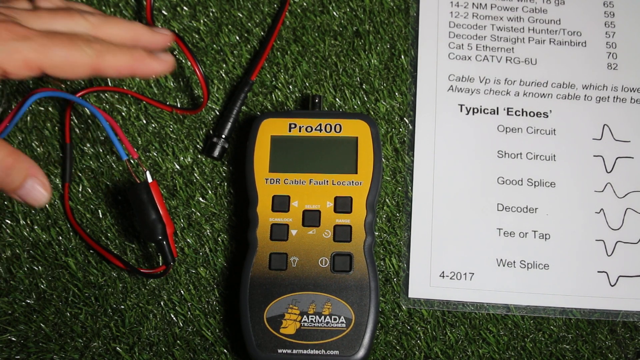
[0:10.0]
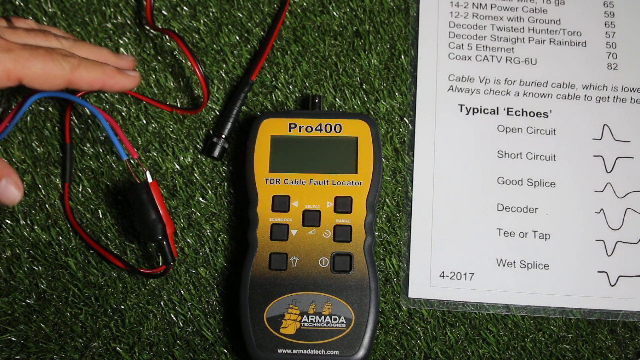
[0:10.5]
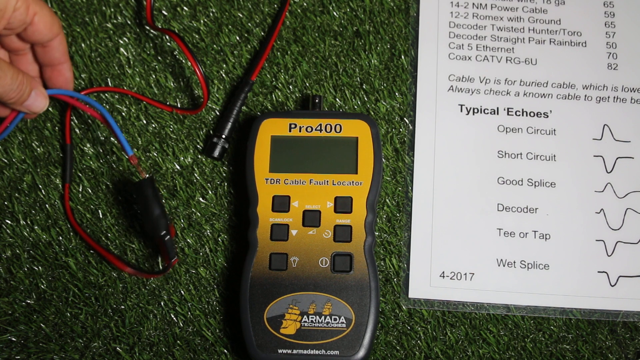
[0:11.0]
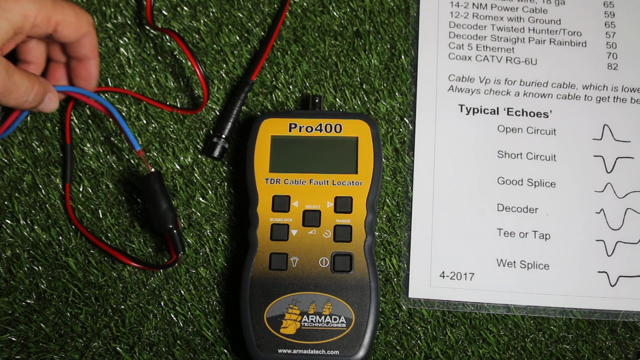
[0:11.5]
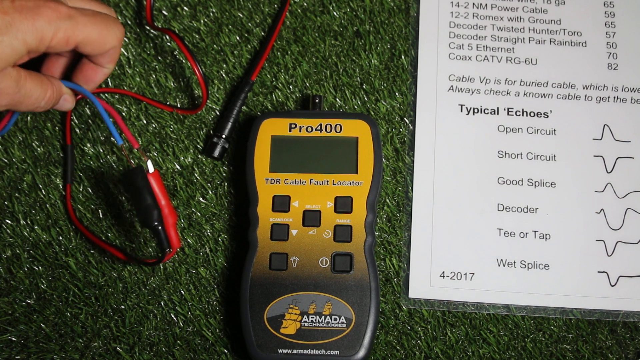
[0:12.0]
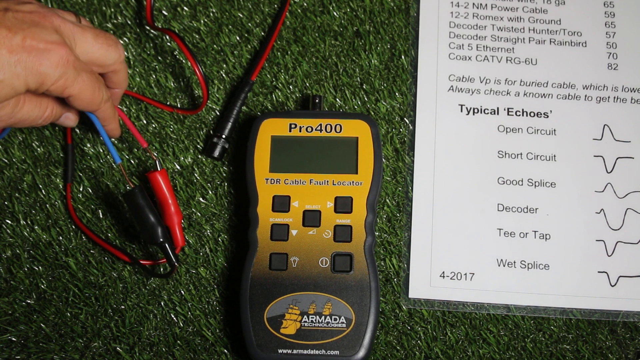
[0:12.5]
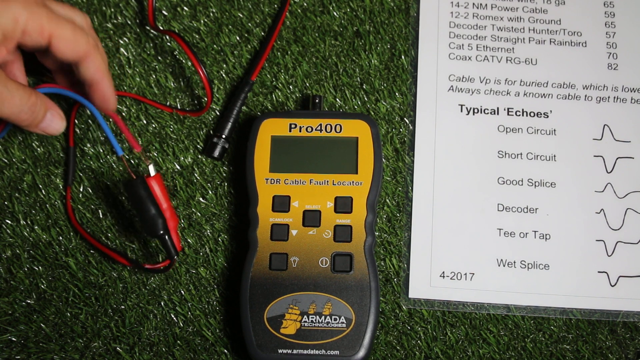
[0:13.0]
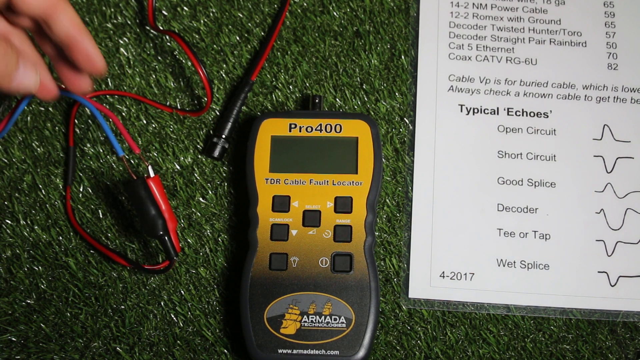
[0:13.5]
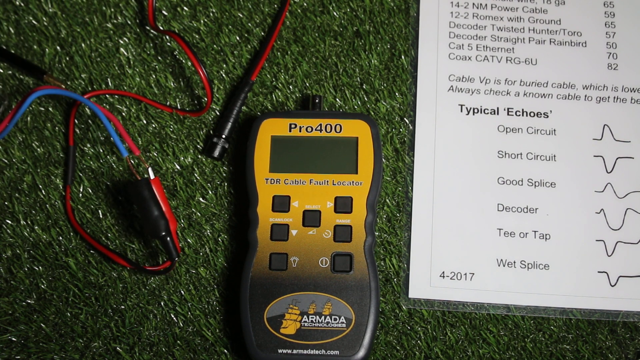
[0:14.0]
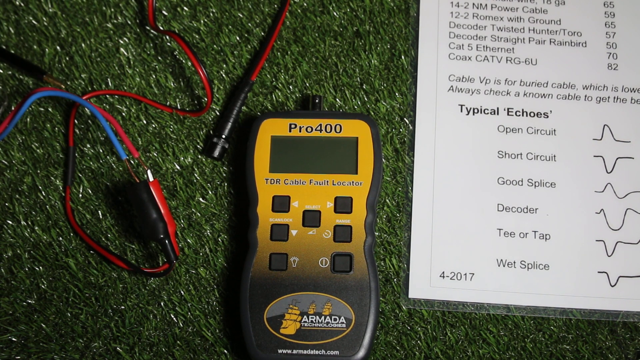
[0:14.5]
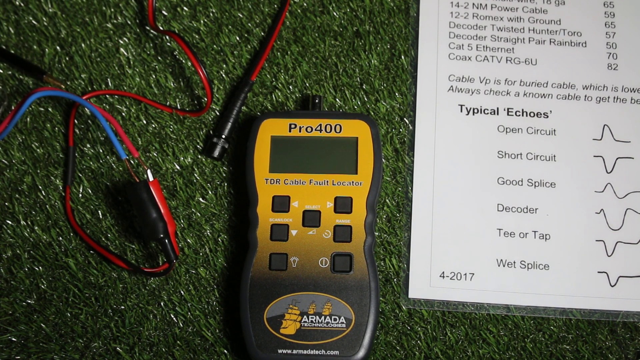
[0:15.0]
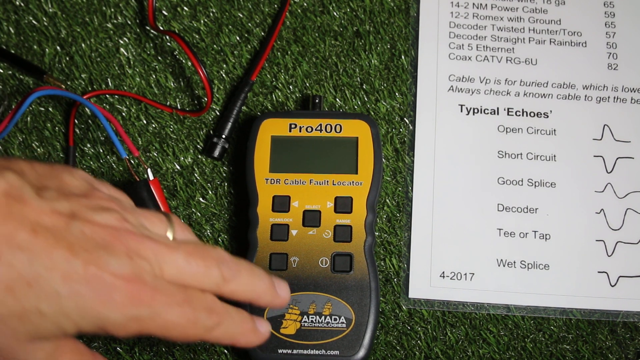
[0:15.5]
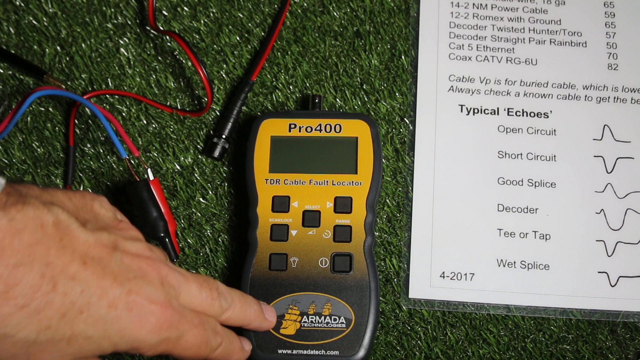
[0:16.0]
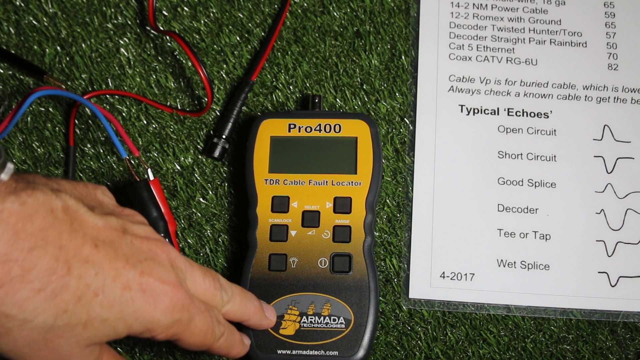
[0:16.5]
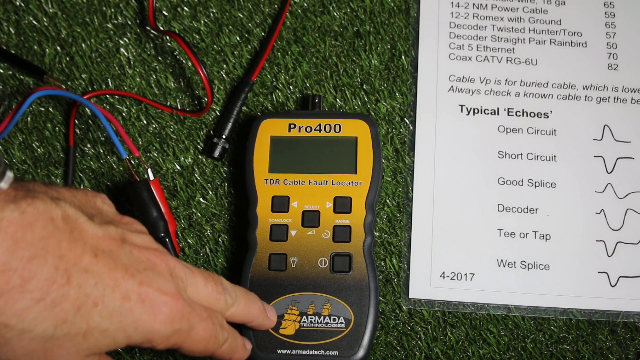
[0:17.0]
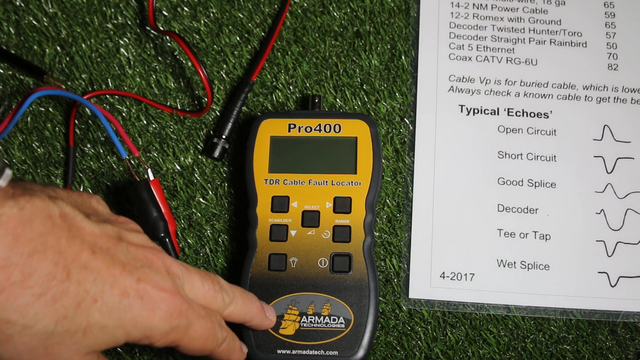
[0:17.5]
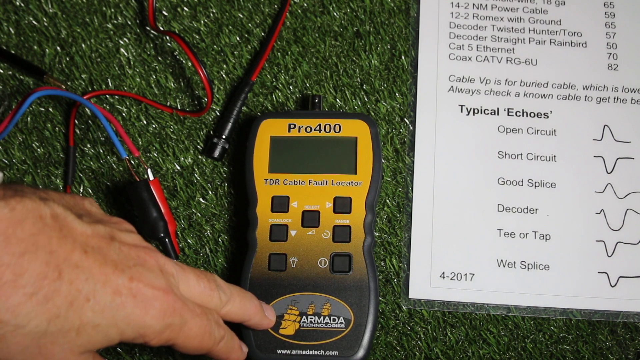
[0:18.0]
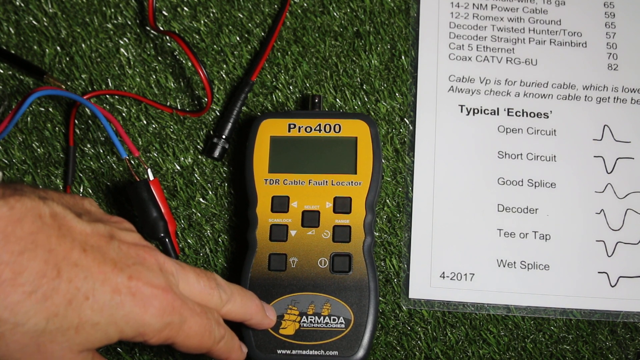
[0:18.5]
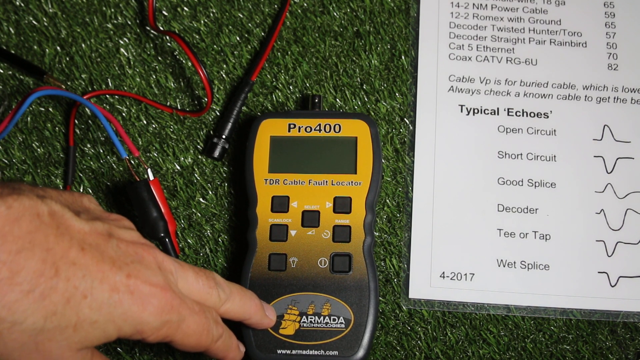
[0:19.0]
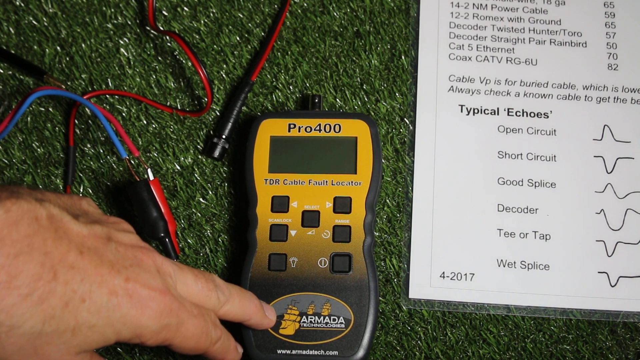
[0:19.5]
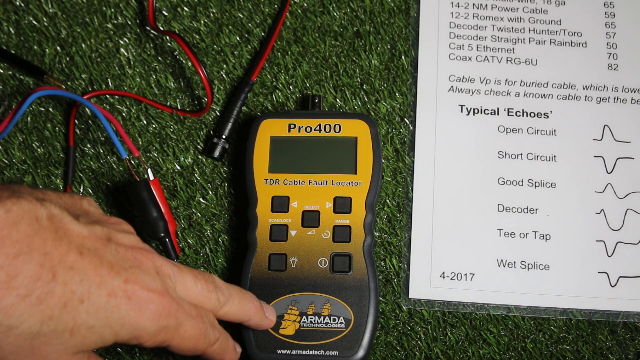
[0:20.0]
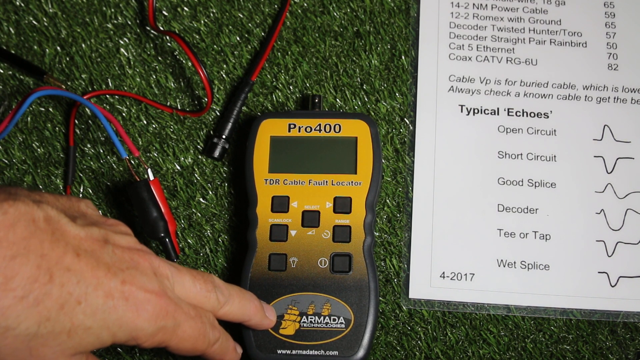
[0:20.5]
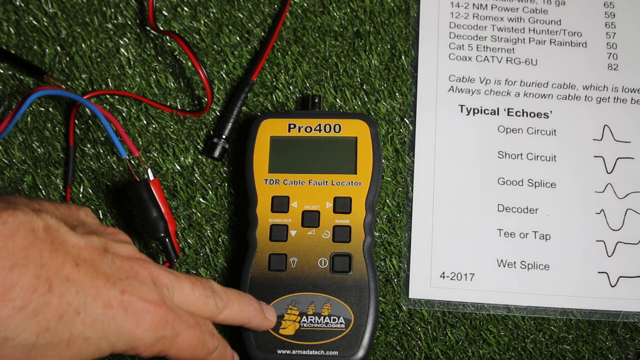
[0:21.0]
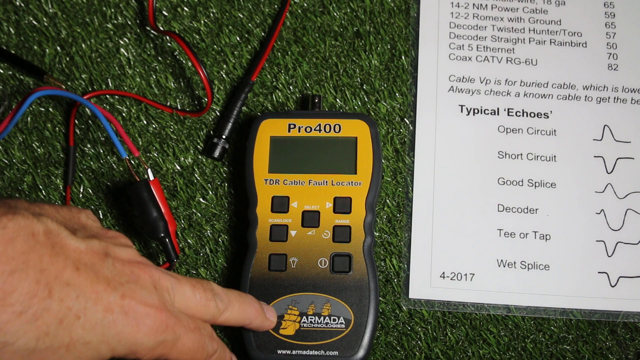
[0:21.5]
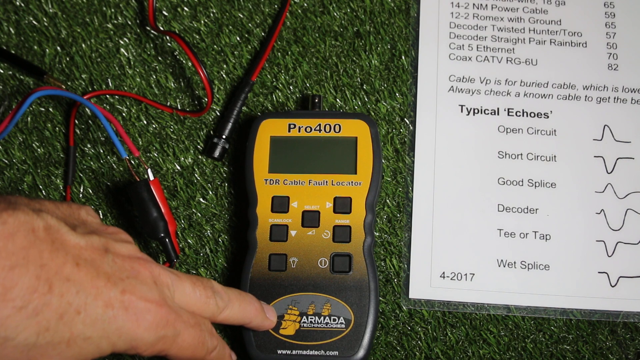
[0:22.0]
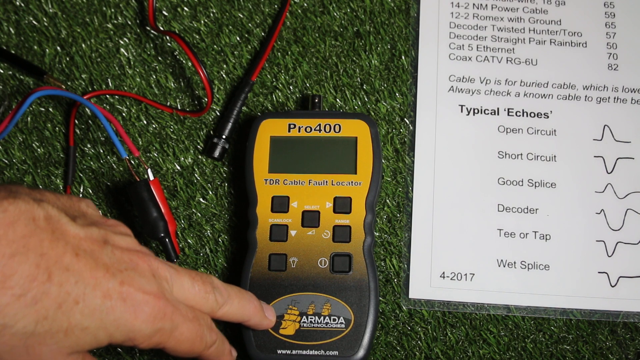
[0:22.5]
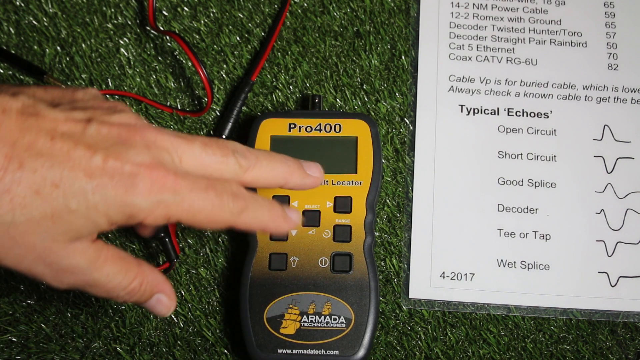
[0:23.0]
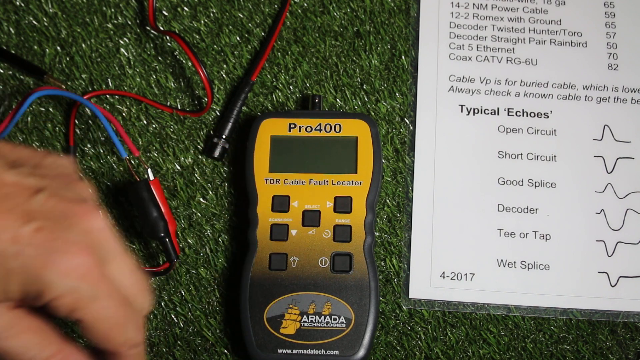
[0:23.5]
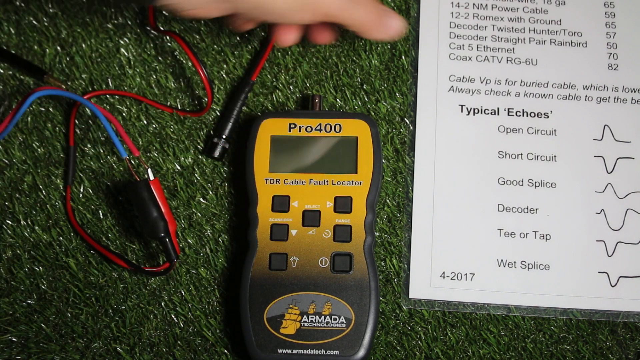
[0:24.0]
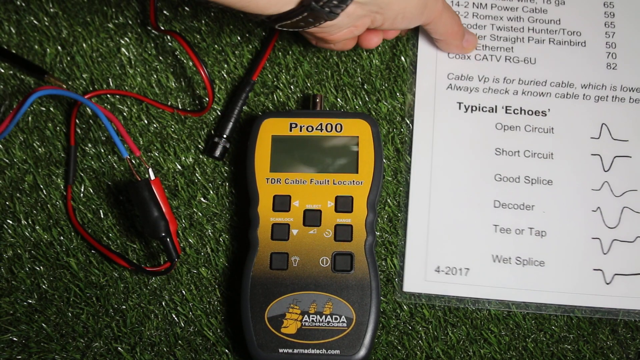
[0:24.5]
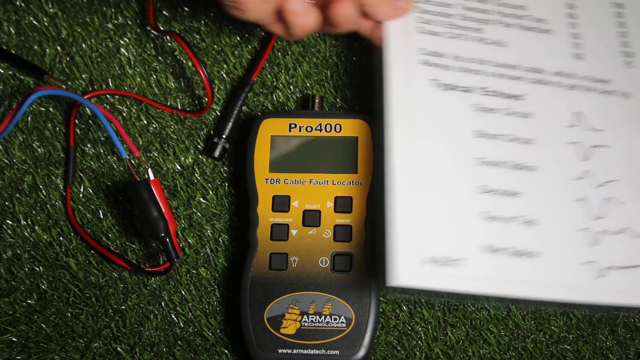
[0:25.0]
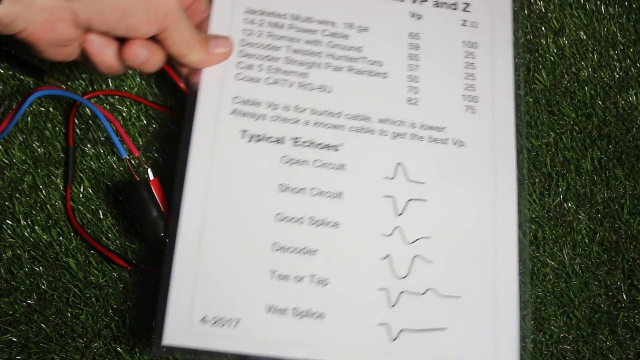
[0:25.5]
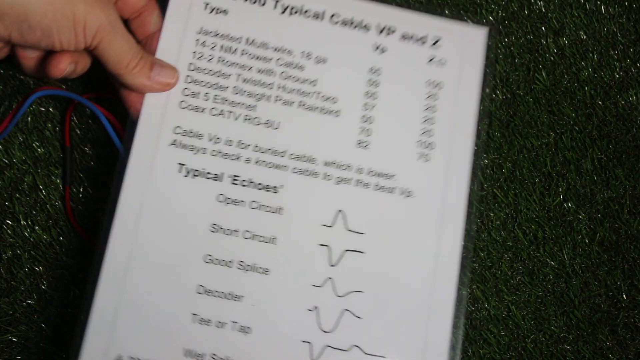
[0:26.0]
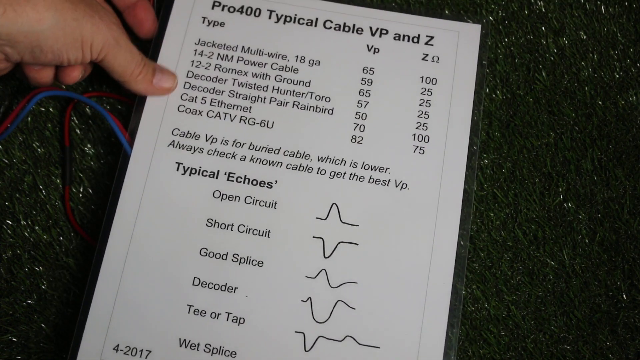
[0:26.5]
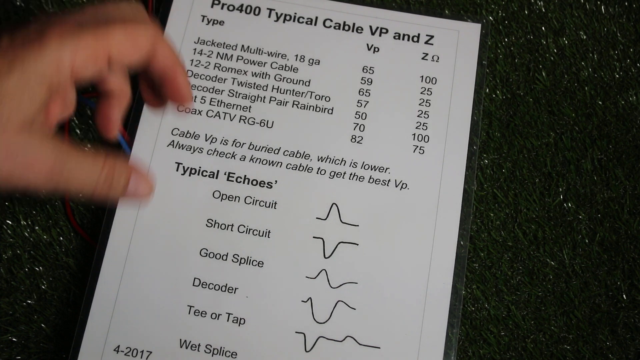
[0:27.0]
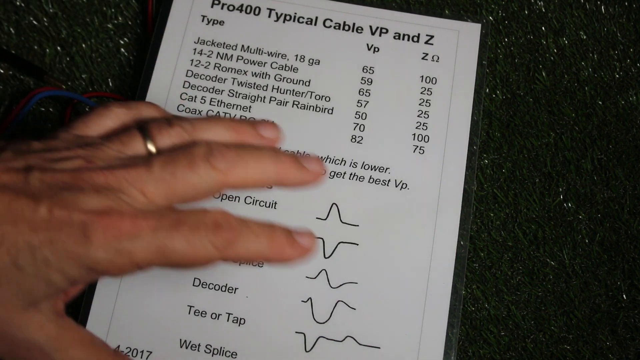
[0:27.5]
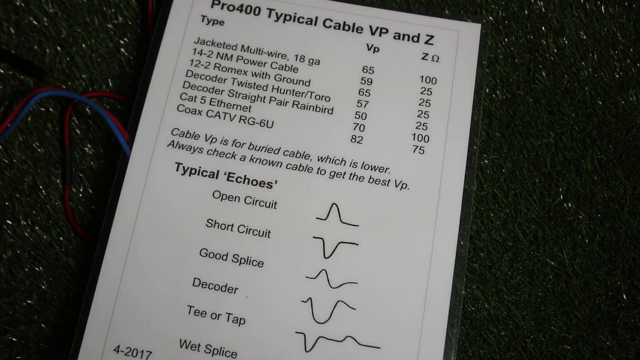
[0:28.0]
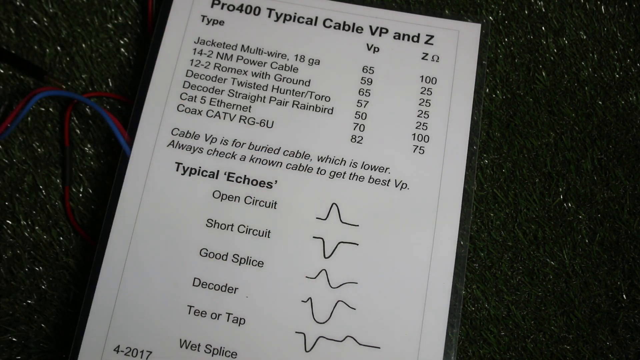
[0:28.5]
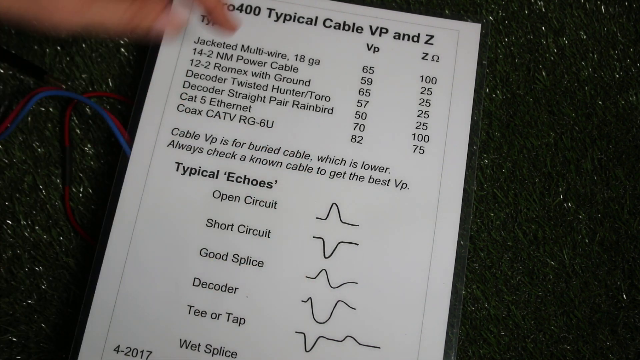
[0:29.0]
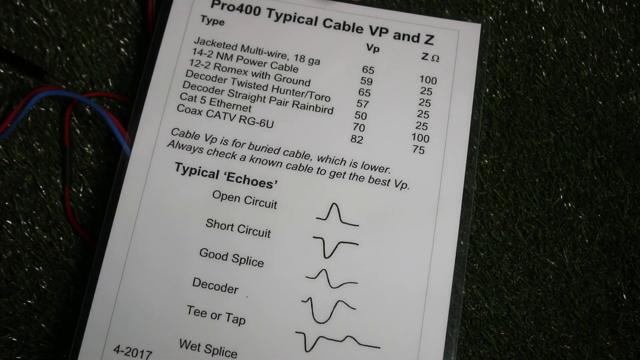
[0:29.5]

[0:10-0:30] A yellow receiver called Pro 400 is shown; it could be a remote control or some other device. It is yellow with a black trim and a black end. A man's hand comes into the frame and touches the red and blue wires lying next to it. He reaches over and touches the large oval "Armada" button on the bottom of the device, first with two fingers, then with his middle finger. He then grabs the white piece of paper on the right side of the device, picks it up and puts it over the device, covering the yellow apparatus. The paper says "typical echoes" and has a lot of information, including the different circuits, splices and decoder. The Pro 400 looks like it is laying on grass that looks kind of like artificial grass.